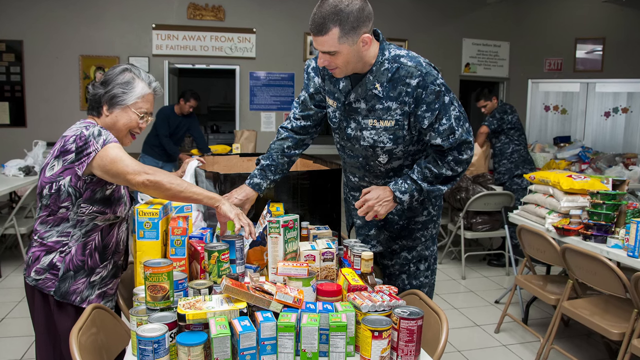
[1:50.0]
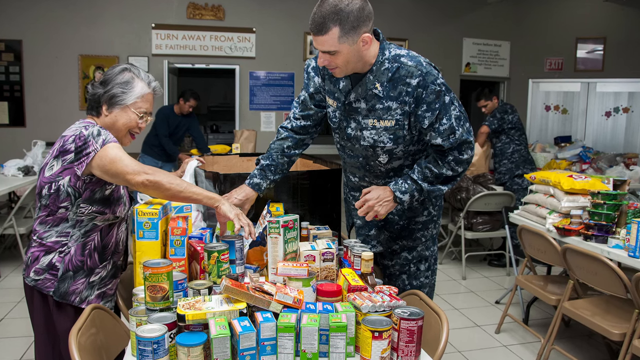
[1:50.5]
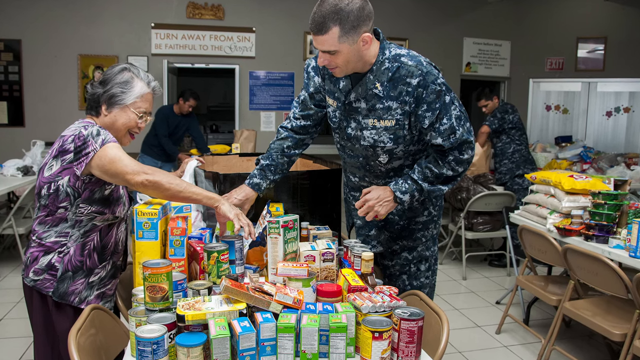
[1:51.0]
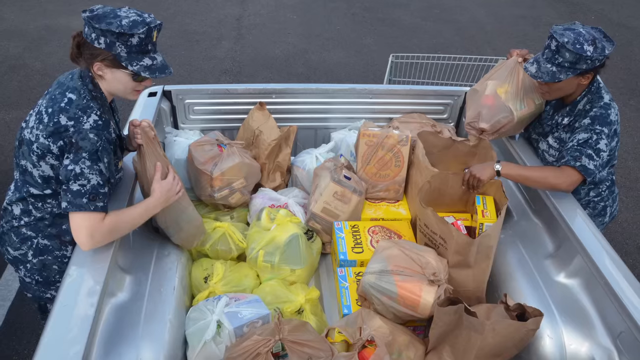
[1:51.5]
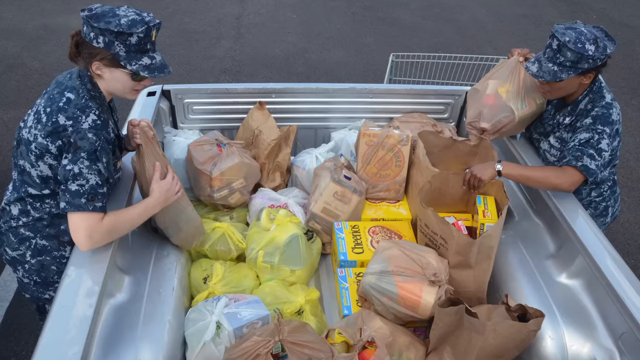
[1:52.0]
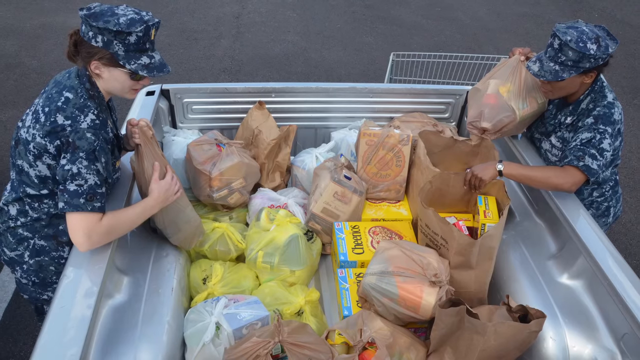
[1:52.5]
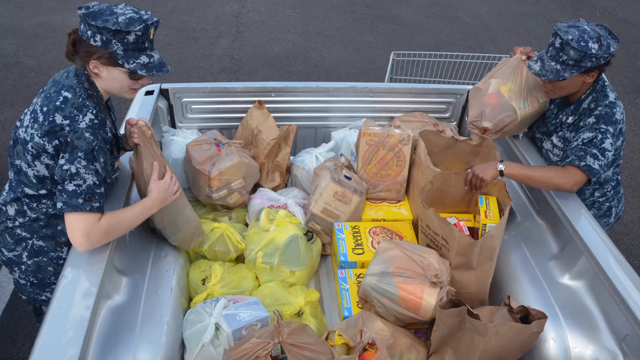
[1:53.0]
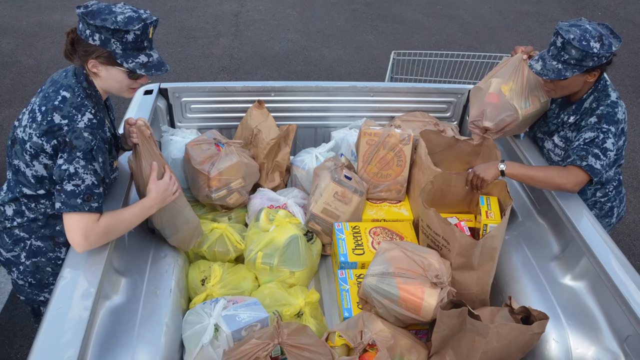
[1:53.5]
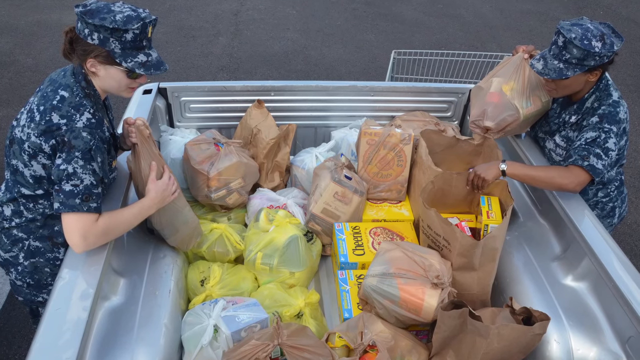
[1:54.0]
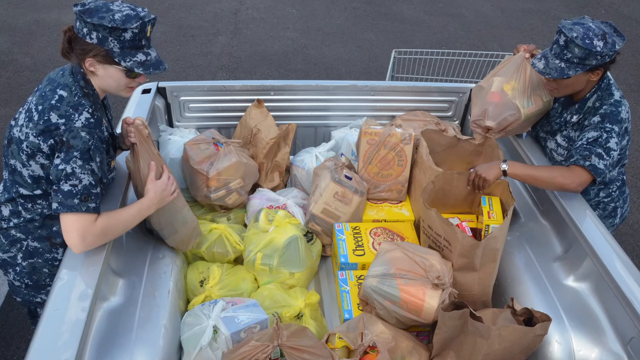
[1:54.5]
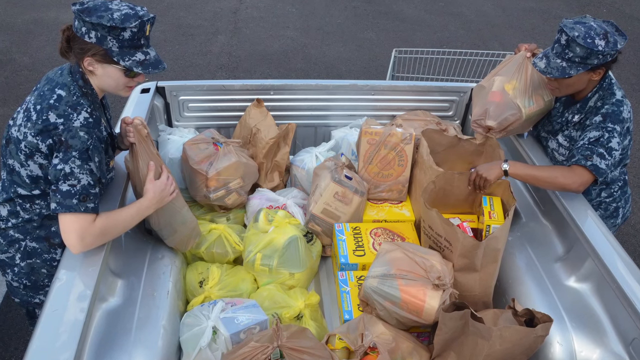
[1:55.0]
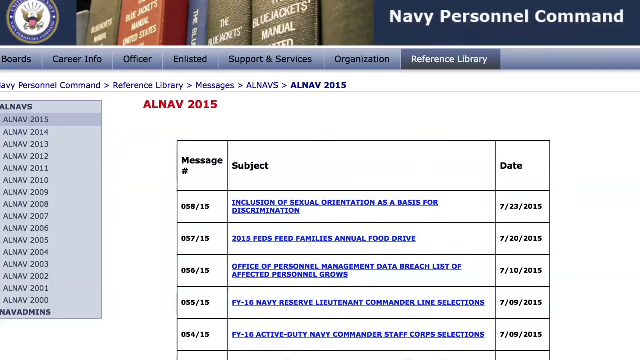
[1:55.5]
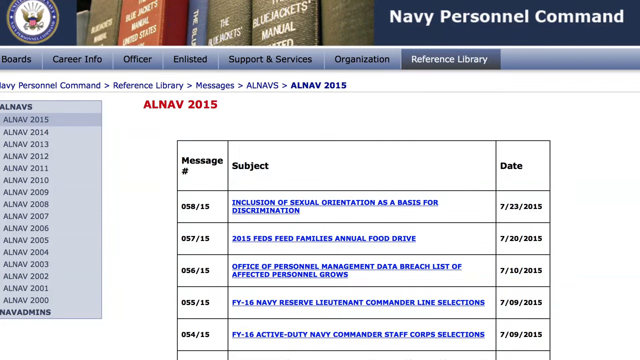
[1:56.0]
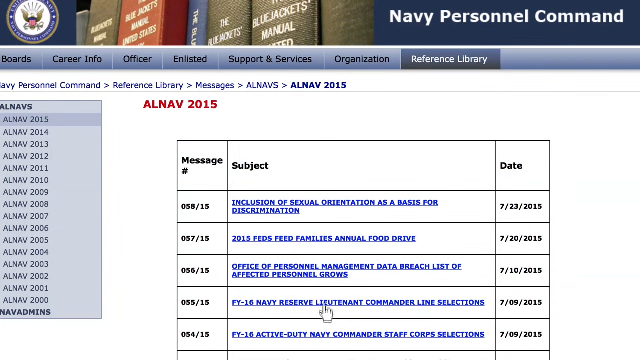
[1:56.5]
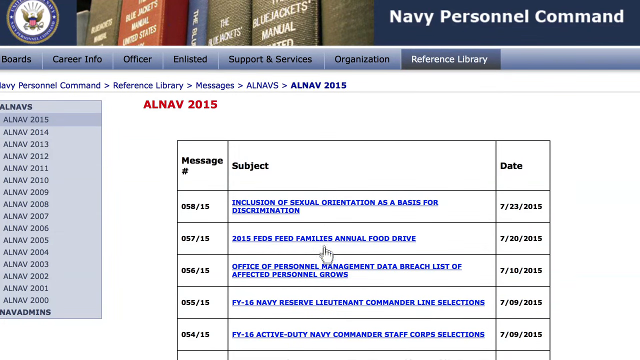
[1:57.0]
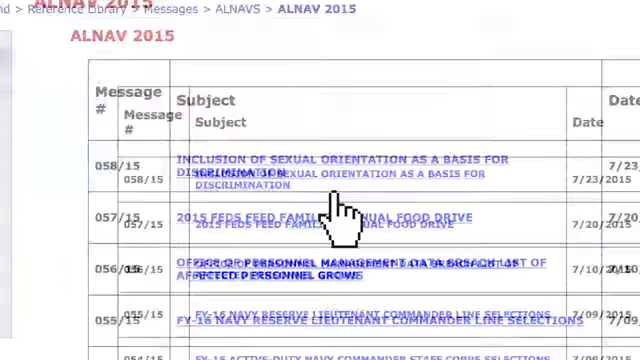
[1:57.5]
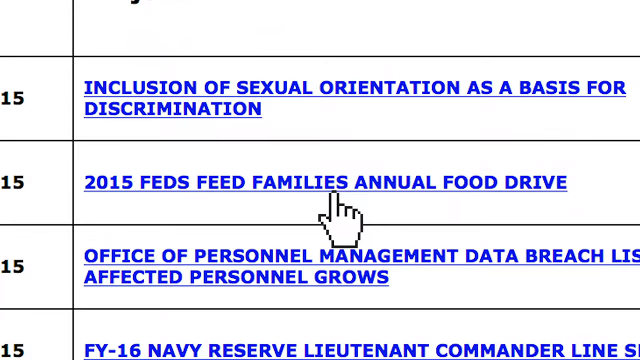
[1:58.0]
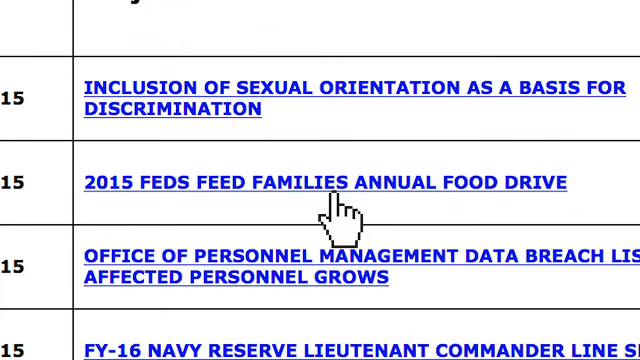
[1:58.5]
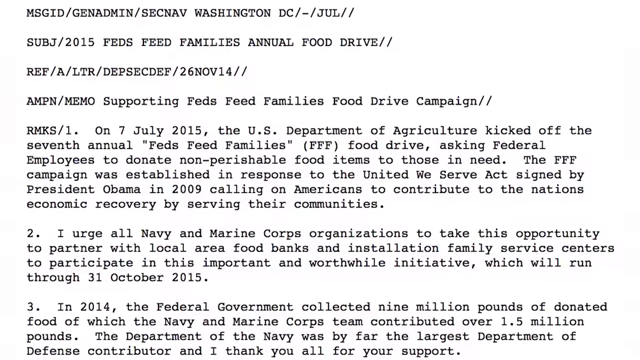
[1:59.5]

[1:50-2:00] What looks like a food drive is shown: a room with tables holding many different groceries, with Navy officers manning the tables and helping people looking at the food. An older woman in a purple, white and black shirt stands in front of a table with her hand touching the top of a can as a very tall Navy officer helps her. Another image shows what looks like the back bed of a truck filled with paper and plastic bags of groceries, in yellow, white and light brown, and what seem to be many boxes of cereal, such as Cheerios and Honey Bunches of Oats. What look to be two female Navy officers in blue, gray and white fatigues and hats seem to be grabbing the groceries. Next, a website appears in a browser, with what looks like an official Navy seal in the top left corner and "Navy Personnel Command" in the top right corner. The page is open under the "Reference Library" tab and shows the "ALNAV 2015" chart, with three columns labeled "message number," "subject" and "date," listing entries such as "inclusion of sexual orientation as a basis for discrimination" and "2015 Feds Feed Families annual food drive." The view zooms in very close on the "2015 Feds Feed Families Annual Food Drive" option, and the user seems to click it, opening a page of text giving information on the Feds Feed Families Annual Food Drive, with three numbered paragraphs below the chart.